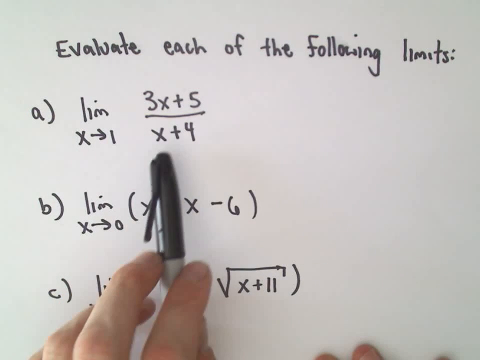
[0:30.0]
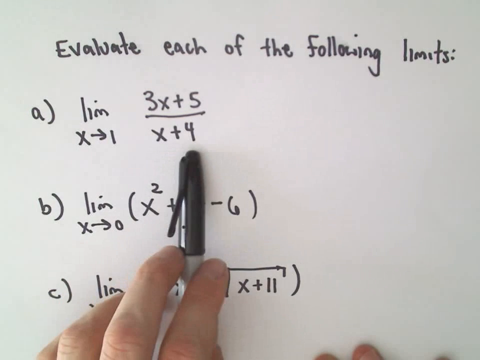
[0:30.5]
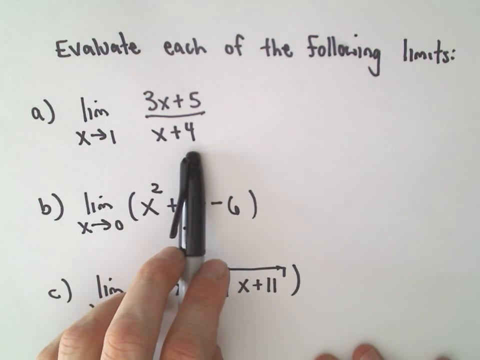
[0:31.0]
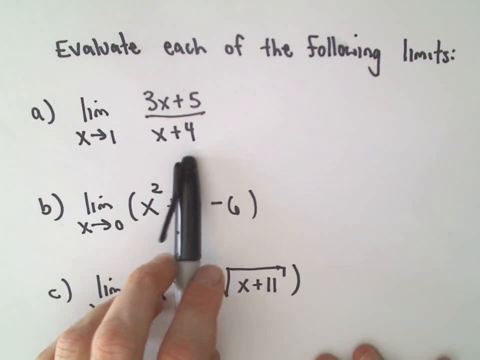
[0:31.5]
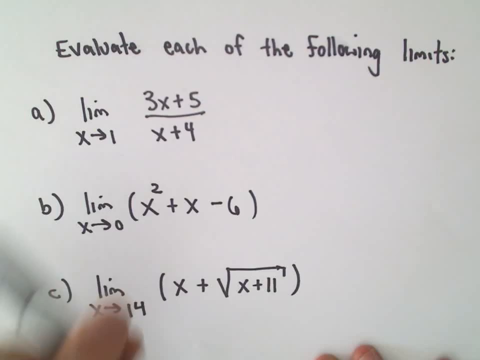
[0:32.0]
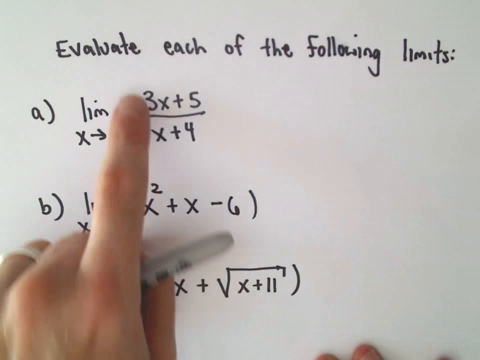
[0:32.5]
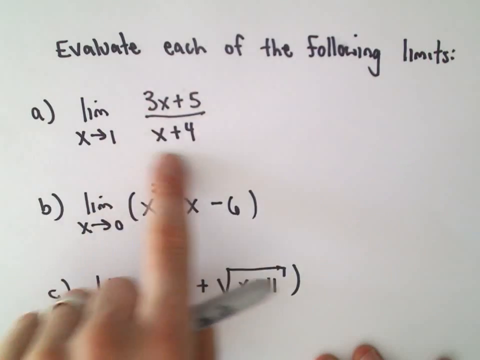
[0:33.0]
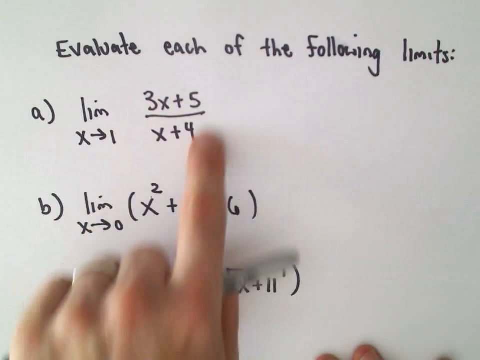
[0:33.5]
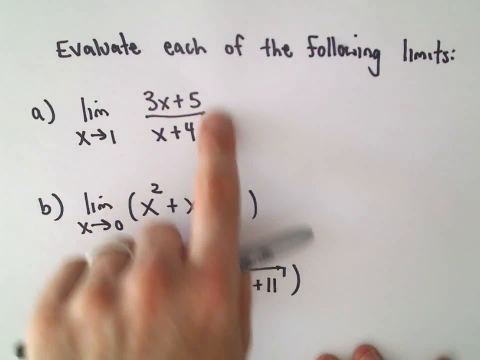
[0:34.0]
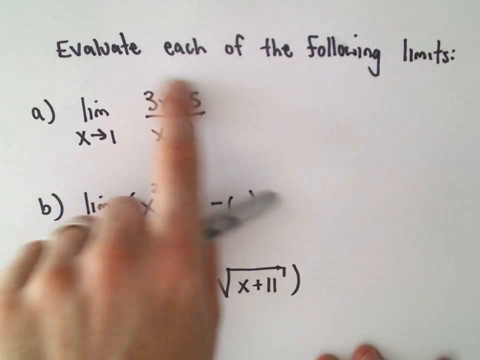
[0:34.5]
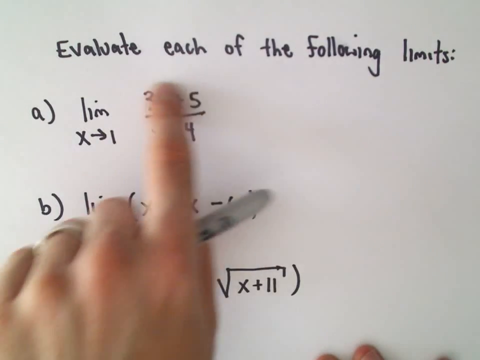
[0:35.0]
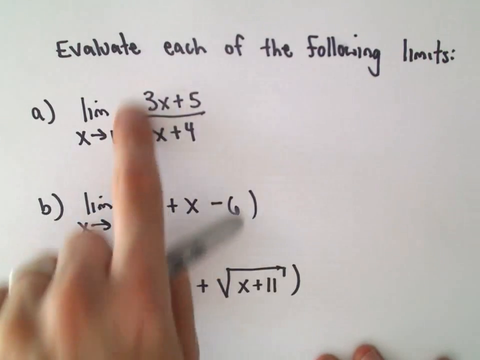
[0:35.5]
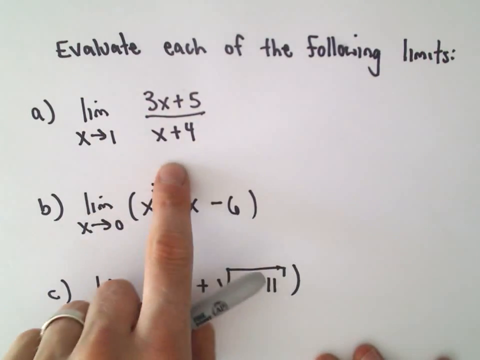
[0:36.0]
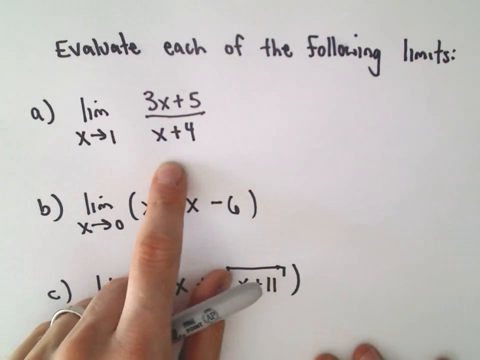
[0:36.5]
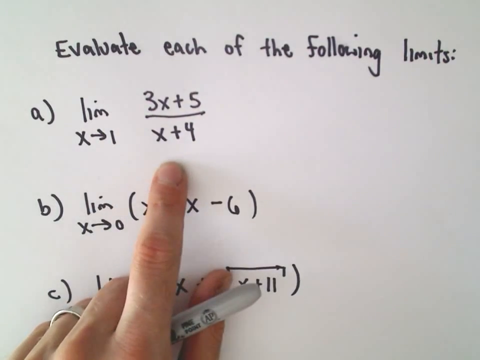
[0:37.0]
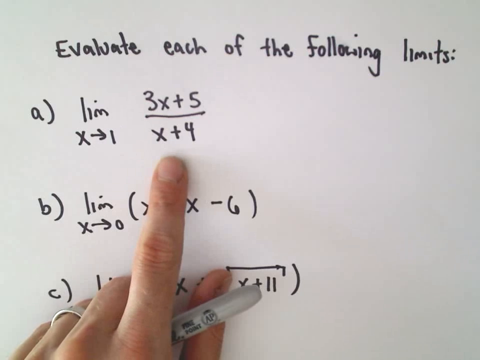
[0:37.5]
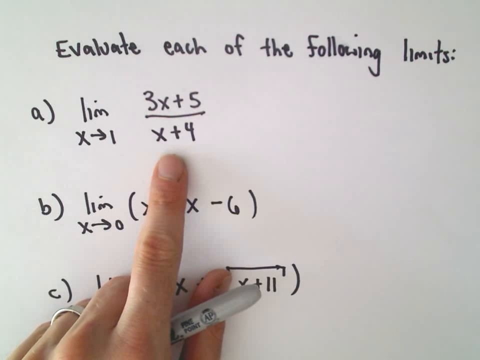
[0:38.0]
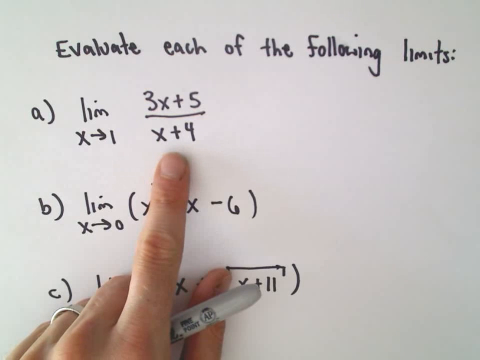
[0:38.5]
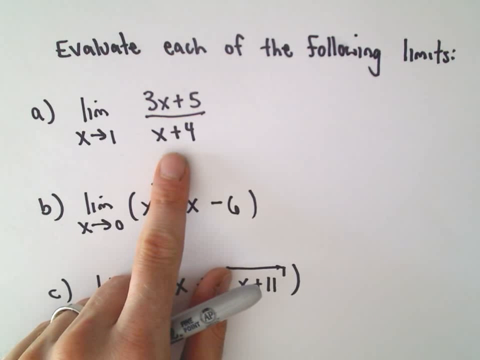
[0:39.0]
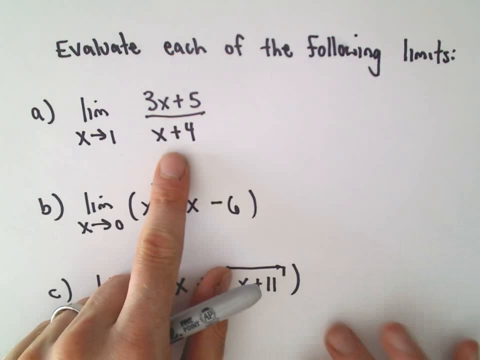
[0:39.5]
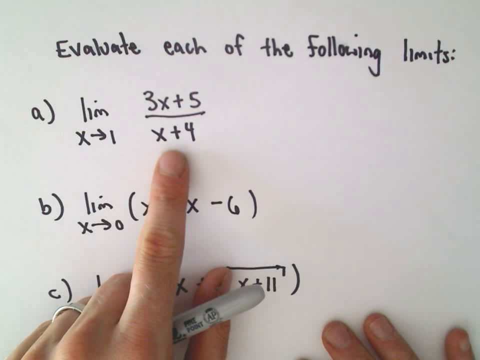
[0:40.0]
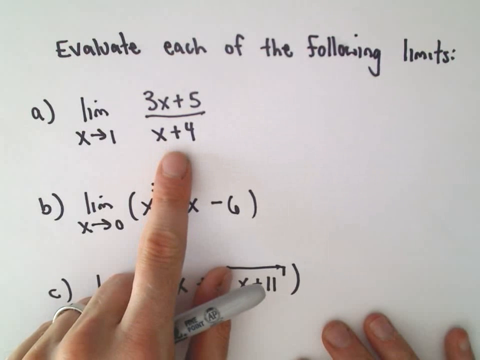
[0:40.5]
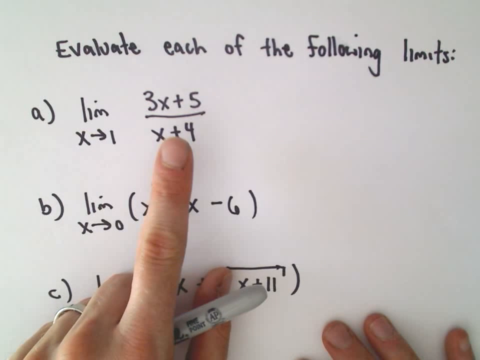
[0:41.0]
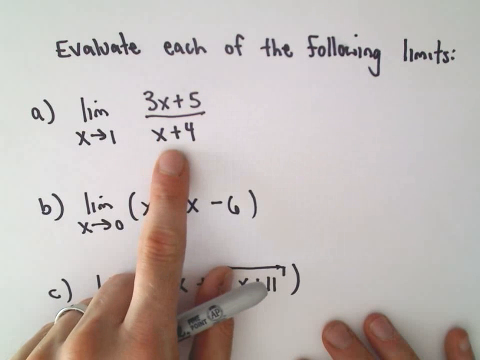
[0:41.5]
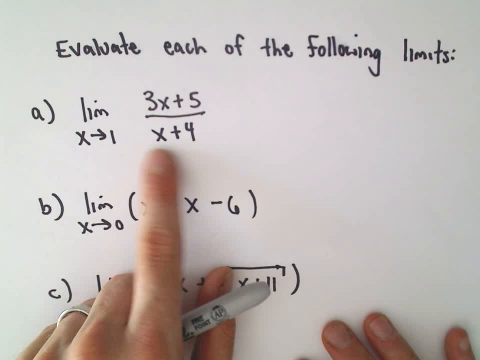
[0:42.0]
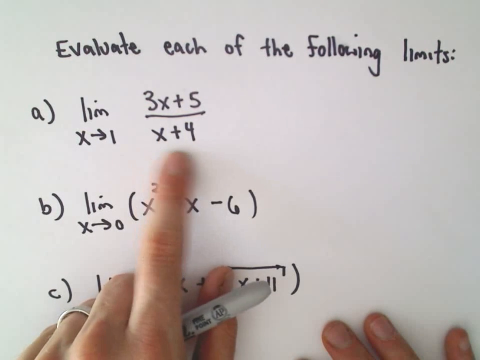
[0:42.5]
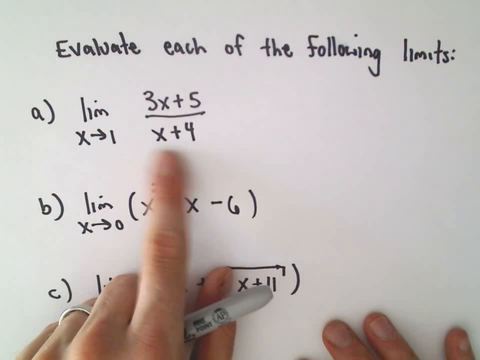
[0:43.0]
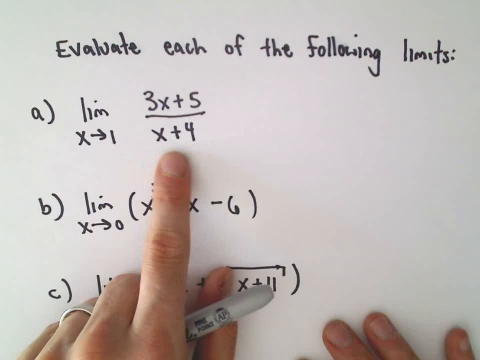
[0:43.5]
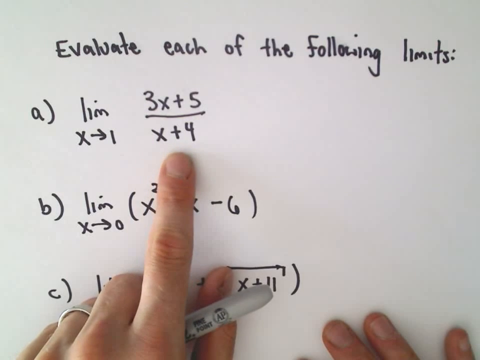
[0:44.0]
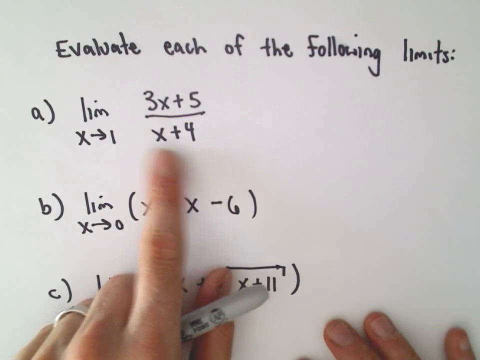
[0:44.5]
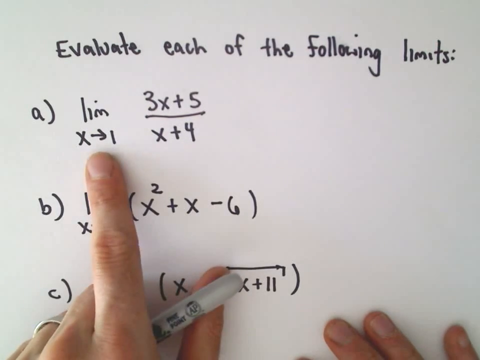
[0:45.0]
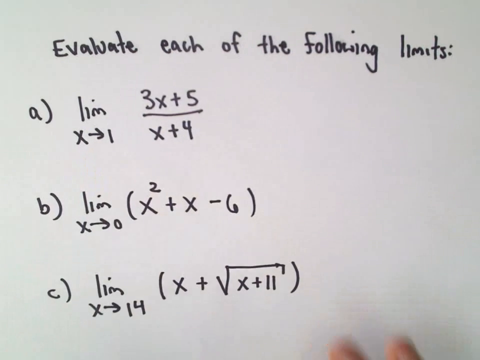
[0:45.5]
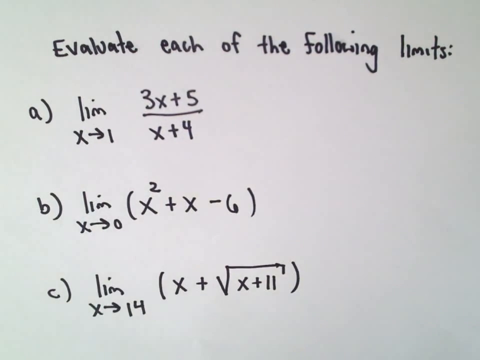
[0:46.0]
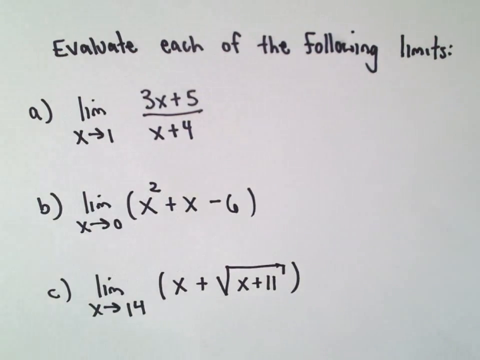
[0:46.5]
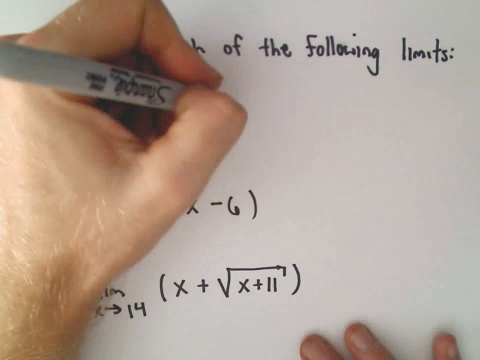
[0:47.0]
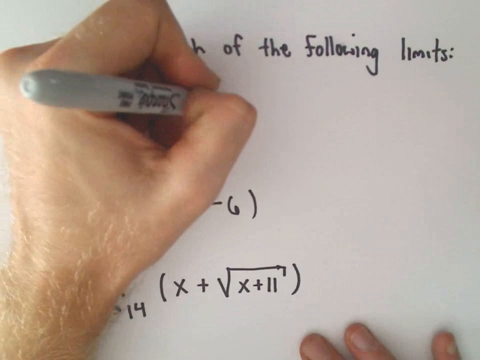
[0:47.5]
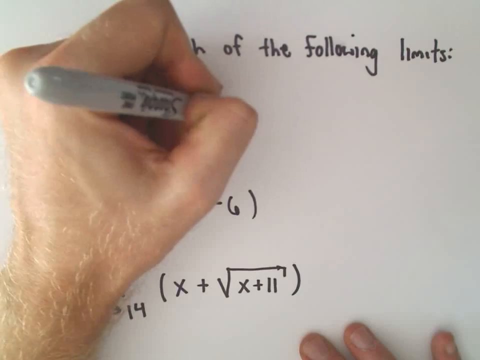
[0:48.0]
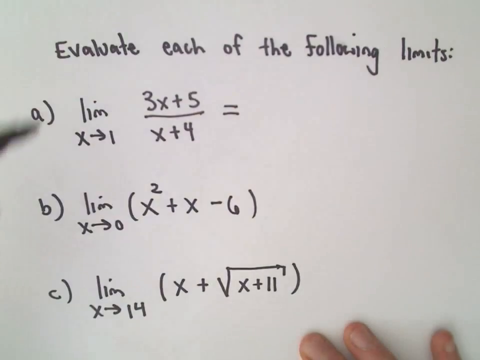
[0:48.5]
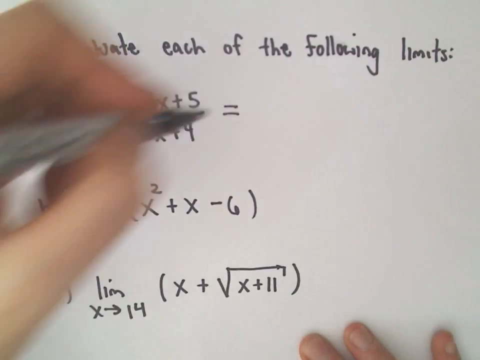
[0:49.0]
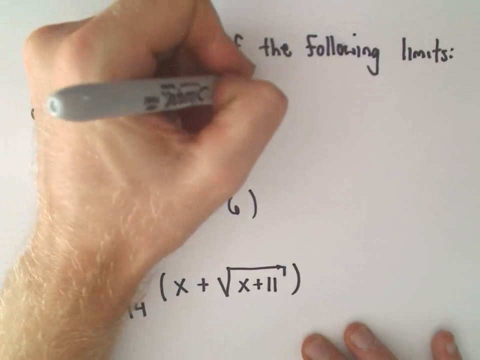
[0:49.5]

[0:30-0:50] The second sheet of paper, reading "evaluate each of the following limits," is shown, with the sharpie pointing toward 3x plus 5 over x plus 4. The person, who appears to be Caucasian, has their hand in view. They point to the equation with a finger, circle around it with the finger, and tap multiple times. After this they seem to be done explaining. They then take the black sharpie, which has a crooked cap, and write an equal sign, then appear to write something more to solve the equation, though it is not yet visible.